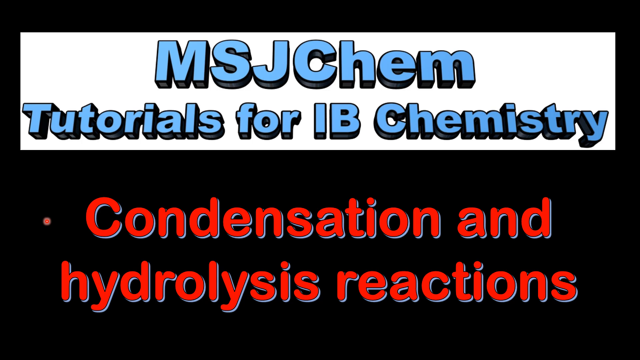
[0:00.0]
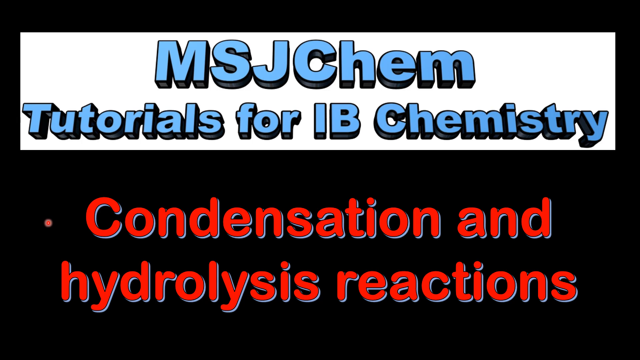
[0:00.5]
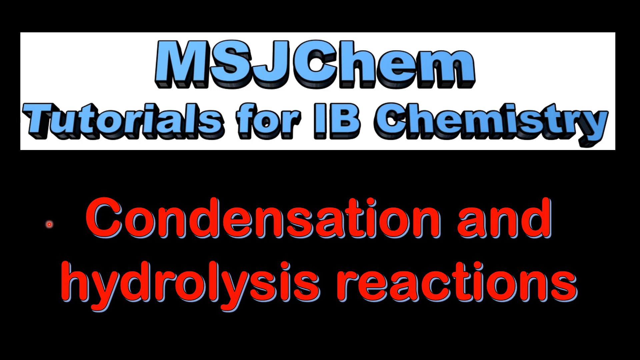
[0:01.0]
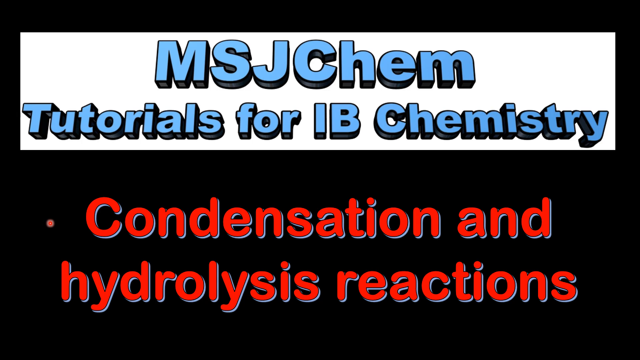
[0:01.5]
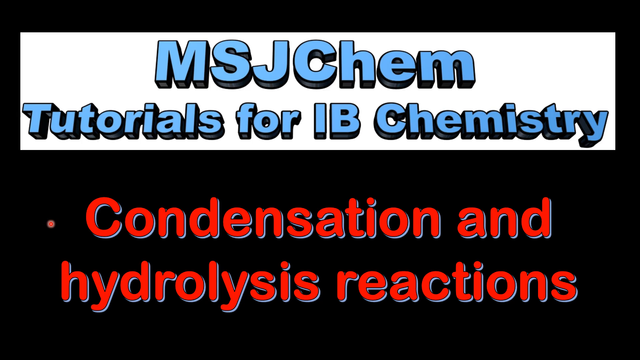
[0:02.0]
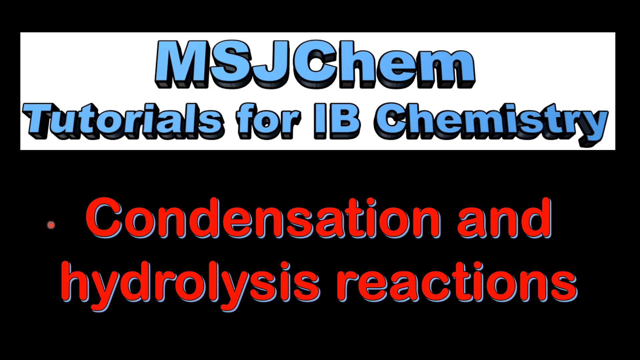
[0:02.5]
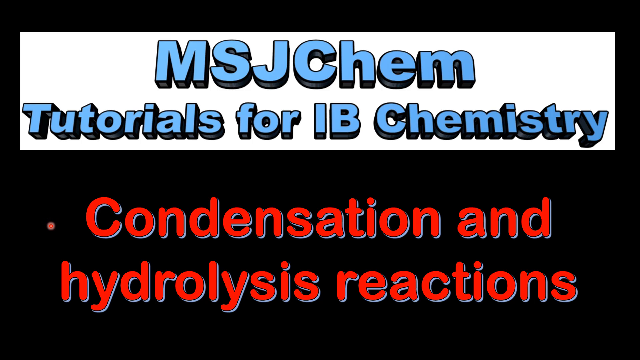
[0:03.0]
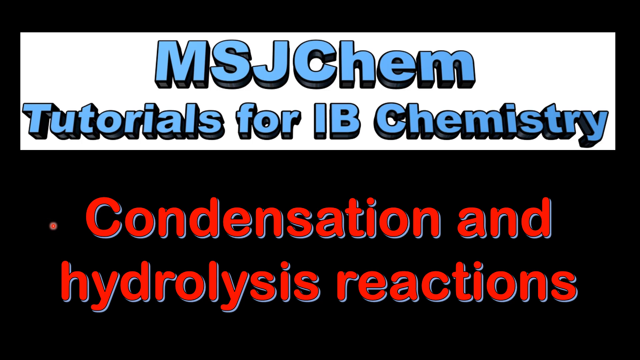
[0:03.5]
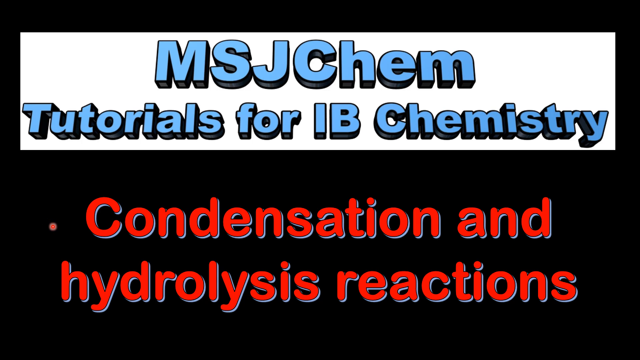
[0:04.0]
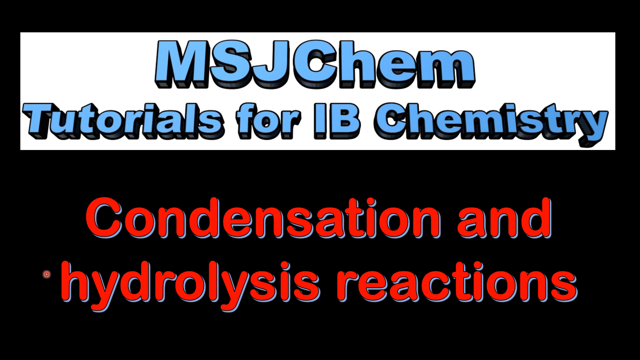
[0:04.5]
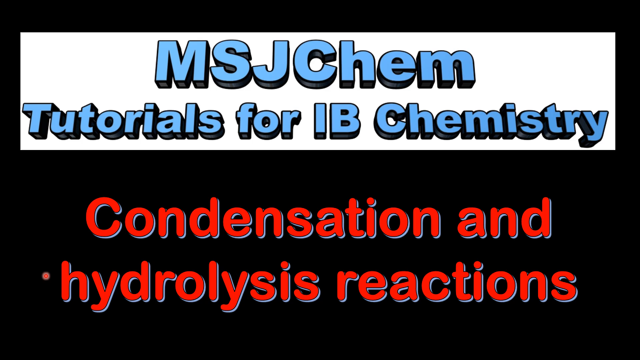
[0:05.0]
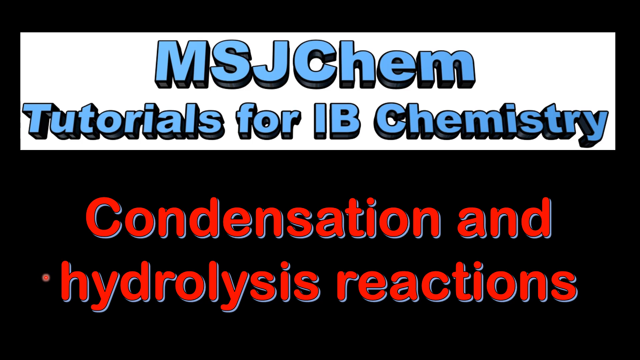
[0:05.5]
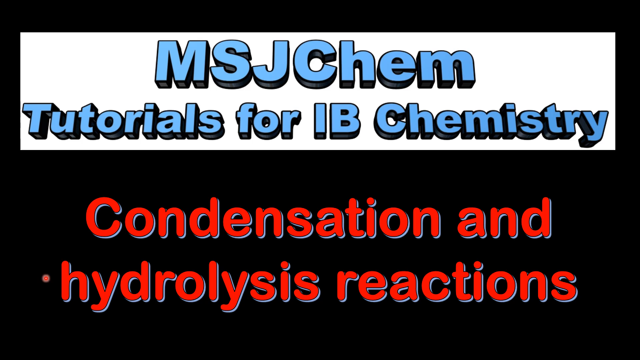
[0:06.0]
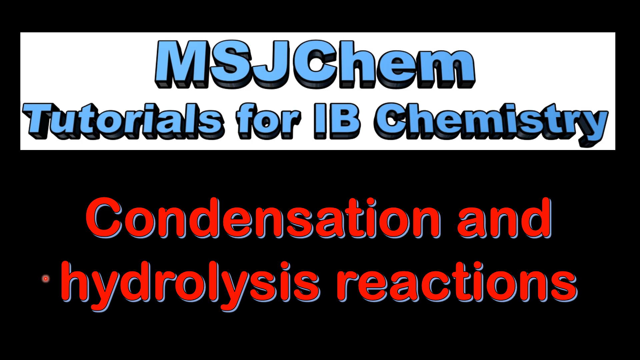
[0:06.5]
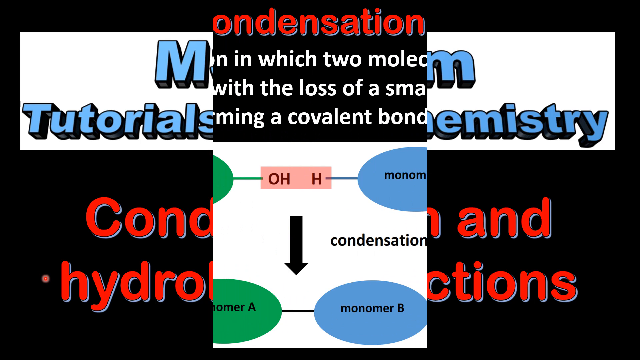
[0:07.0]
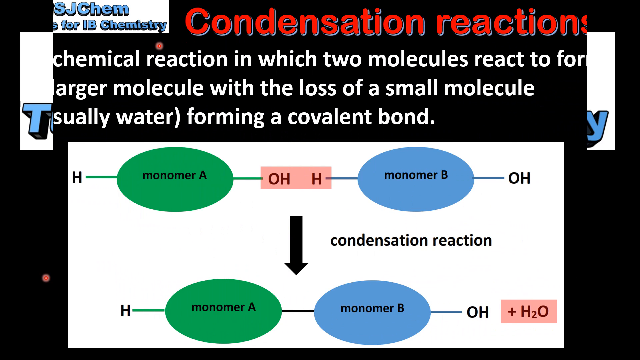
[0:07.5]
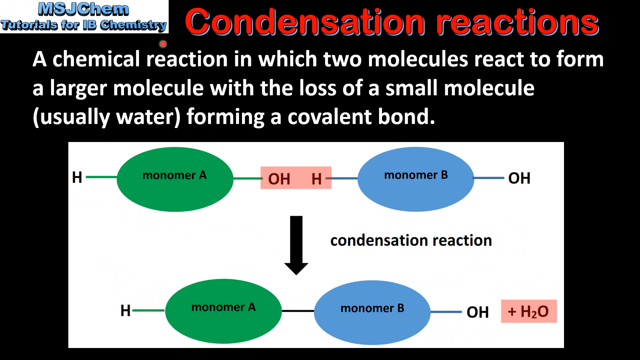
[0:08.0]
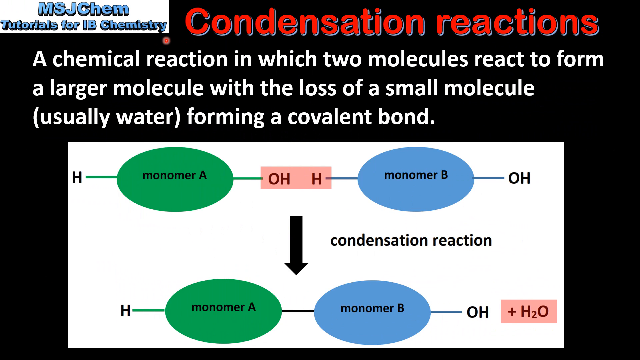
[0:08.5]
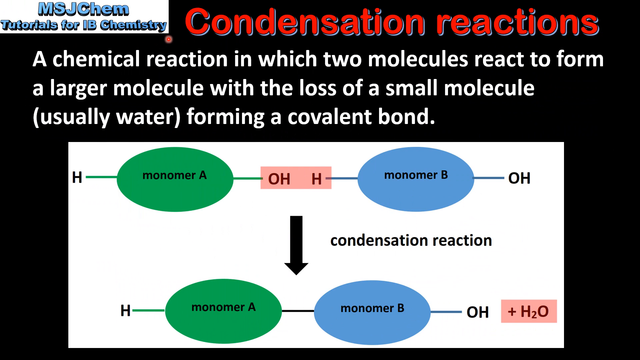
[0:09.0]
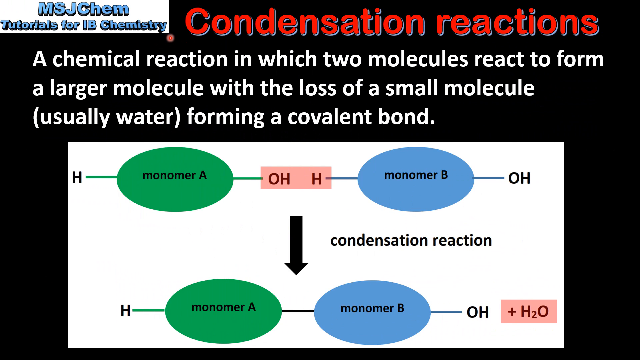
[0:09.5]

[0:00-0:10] A white banner with blue text reads "MSJ Chem Tutorials for IB Chemistry," and a red bullet point with red text reads "Condensation and Hydrolysis Reactions." A small red circle moves around and then moves down to the hydrolysis reactions. Next, a screen shows "MSJ Chem Tutorials for IB Chemistry" in a white banner, with red text reading "Condensation Reactions." White text reads "a chemical reaction in which two molecules react to form a larger molecule with the loss of a small molecule usually water forming a covalent bond." A white box contains green and blue circles and pink boxes, with black text labels reading "H Monomer A OH H Monomer B OH H Monomer A Monomer B OH plus H2O," and a black arrow is labeled "Condensation Reaction" in black text.